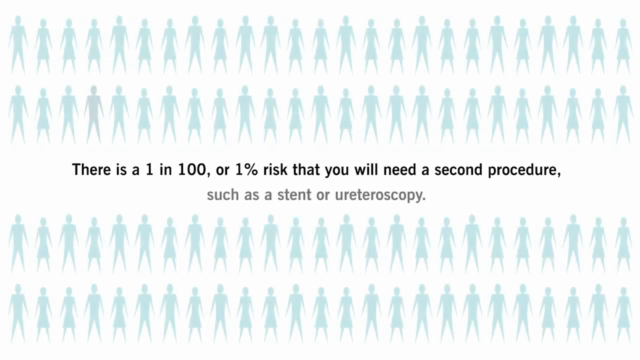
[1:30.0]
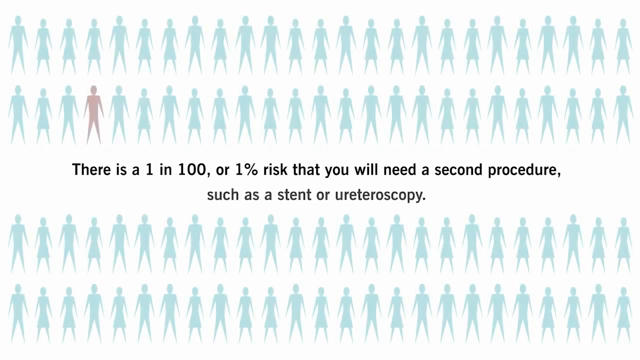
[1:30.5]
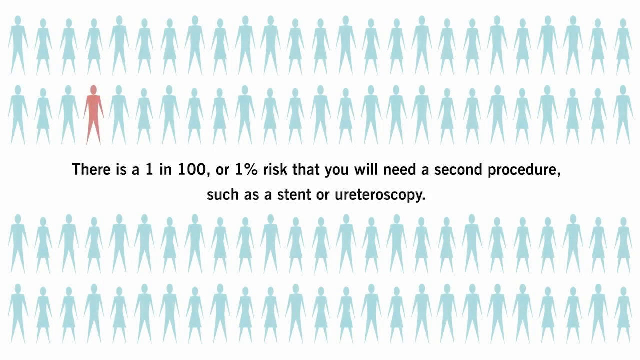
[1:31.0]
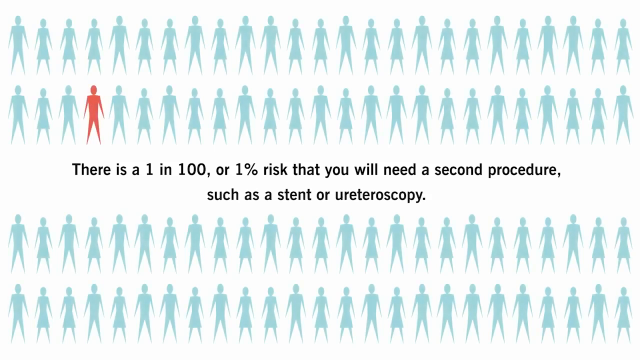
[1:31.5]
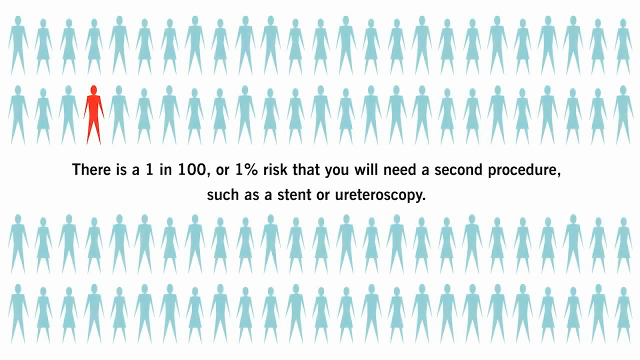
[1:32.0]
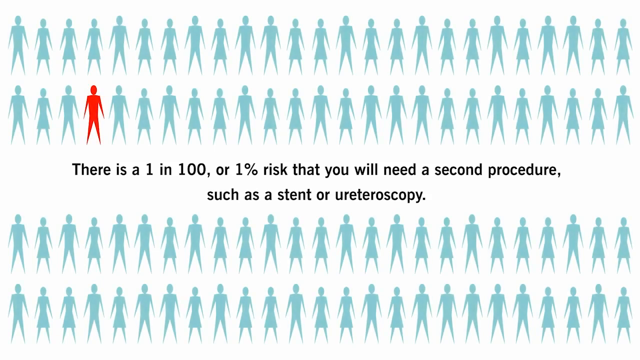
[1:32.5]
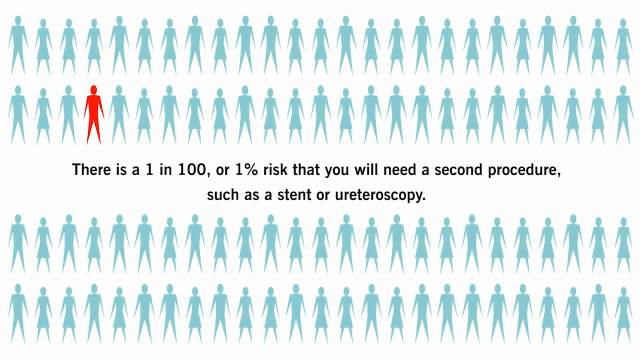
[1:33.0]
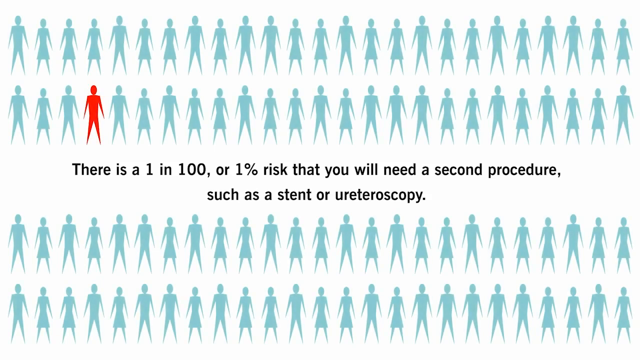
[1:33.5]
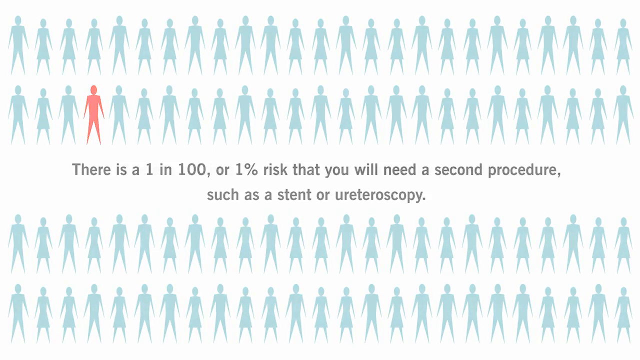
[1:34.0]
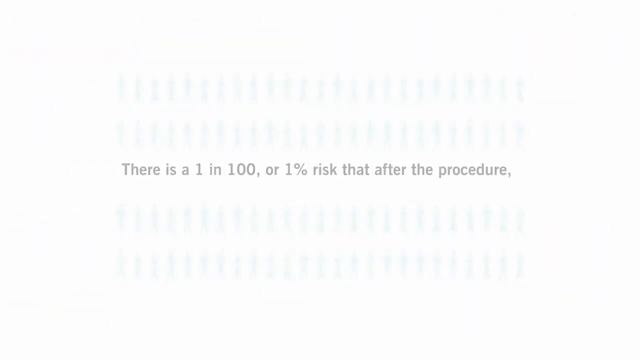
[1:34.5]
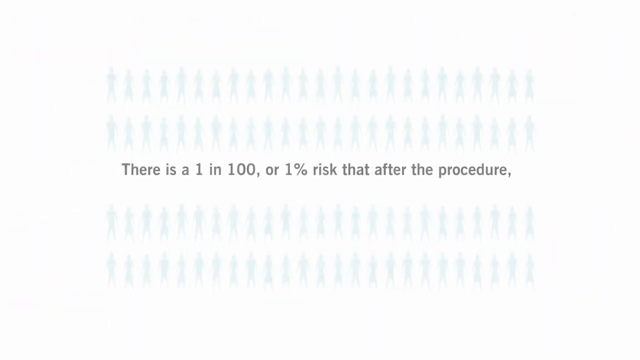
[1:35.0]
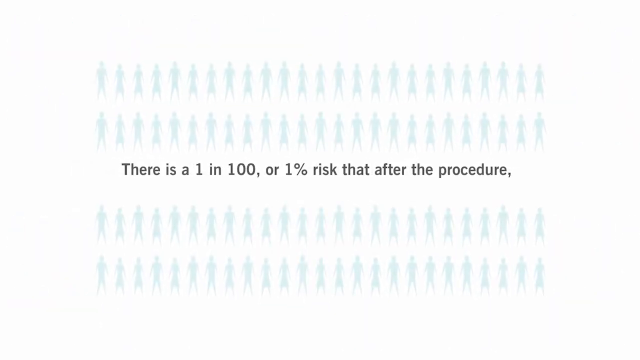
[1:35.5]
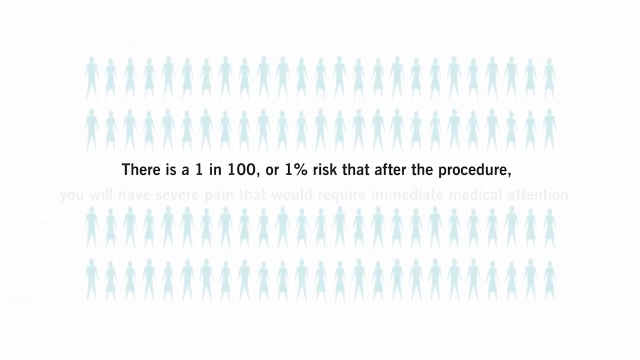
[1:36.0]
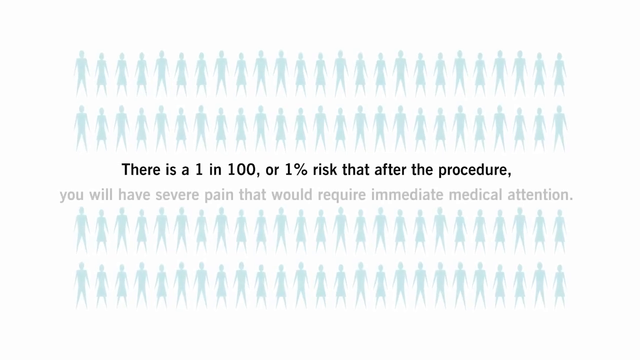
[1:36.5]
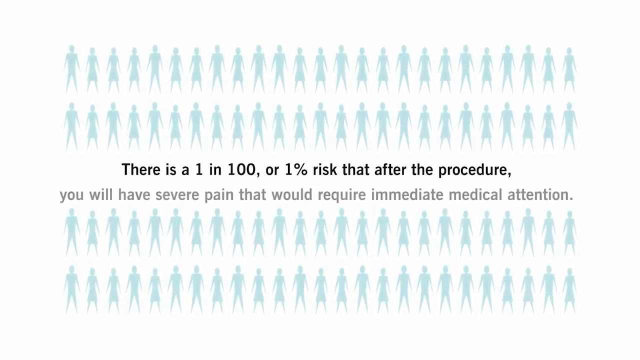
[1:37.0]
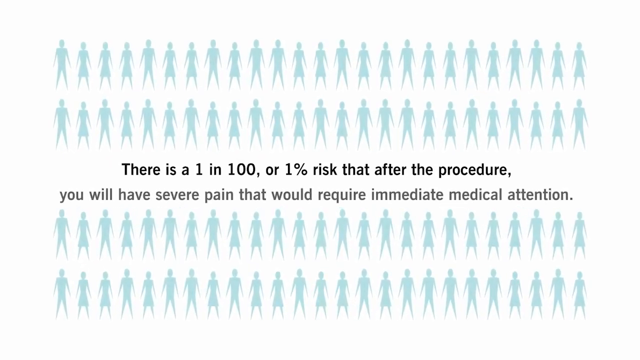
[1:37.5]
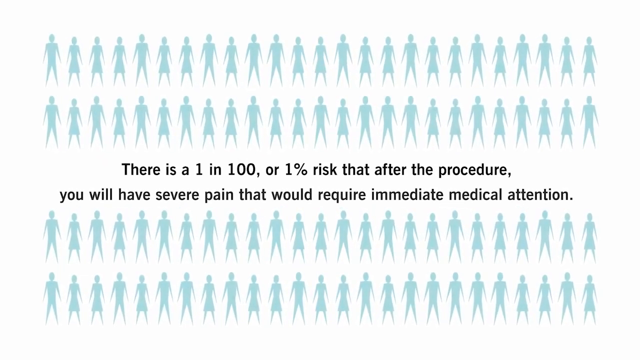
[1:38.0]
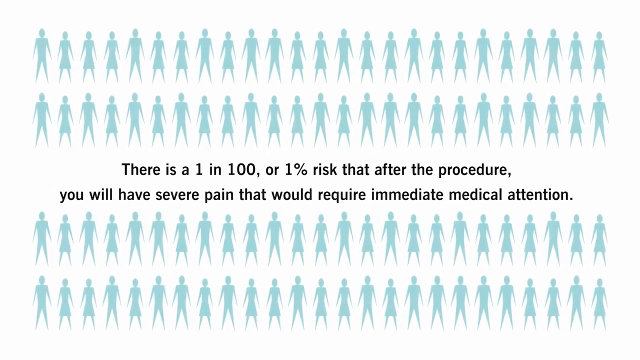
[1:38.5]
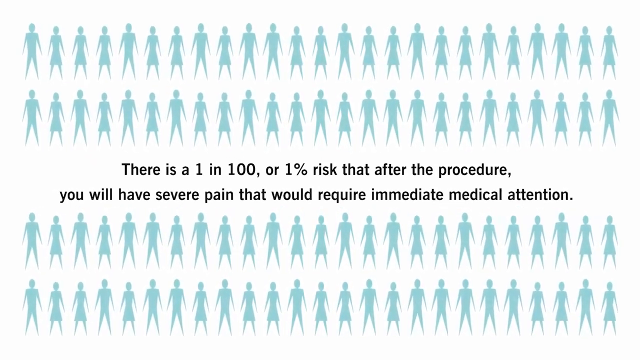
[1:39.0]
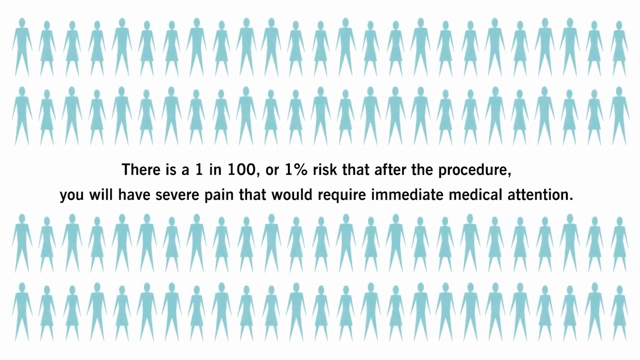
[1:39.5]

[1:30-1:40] Text in the center of the screen states a one in 100 risk that you will need a second procedure such as a stent or a uteroscopy, with light green human forms above and below the text showing how many people one in 100 is. The text then reads "1 in 100 or 1%" for needing a second procedure such as a stent or ureteroscopy, with pictures of people across the top and bottom of the screen, one person shown in red and the rest, who are not at risk, in blue. Then the text reads "there is a 1 in 100 or 1% risk that after the procedure you will have severe pain that would require immediate medical attention."